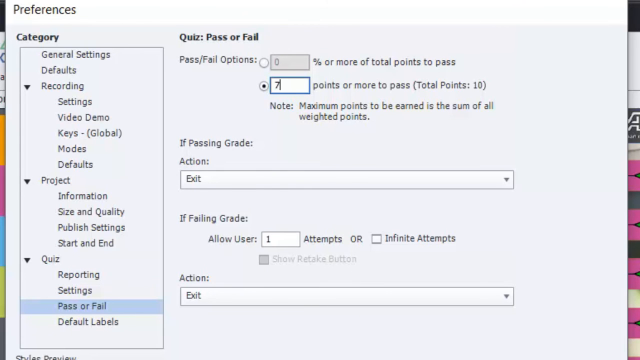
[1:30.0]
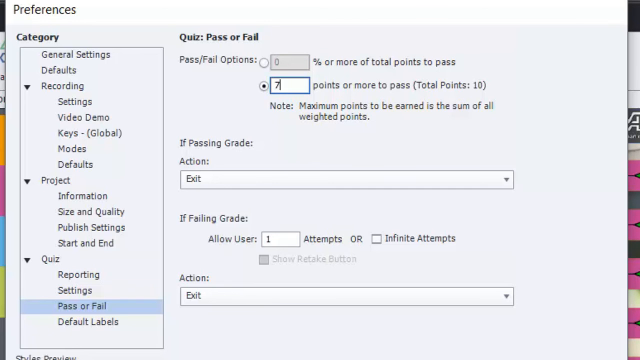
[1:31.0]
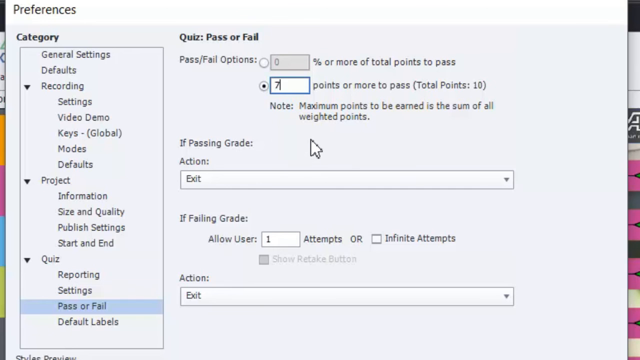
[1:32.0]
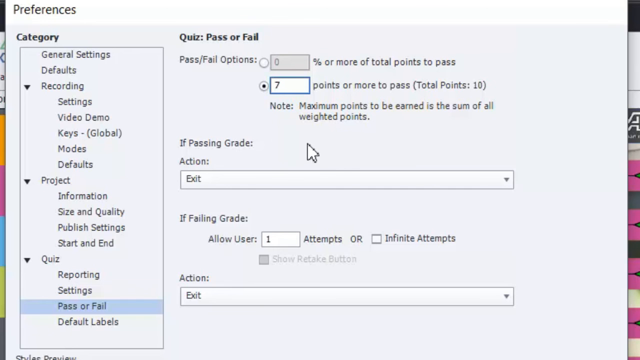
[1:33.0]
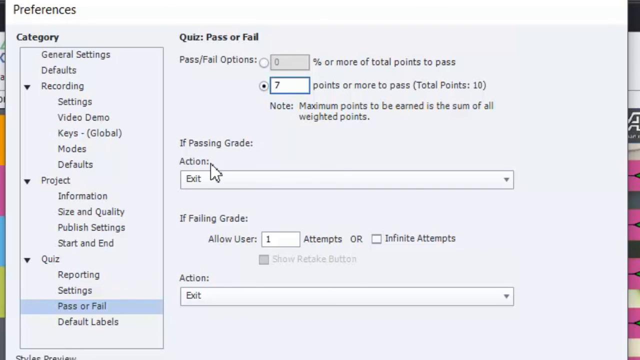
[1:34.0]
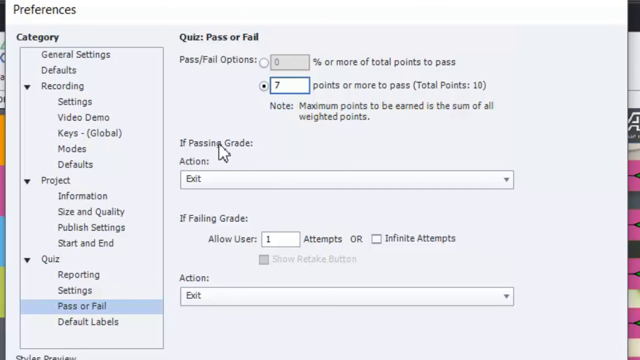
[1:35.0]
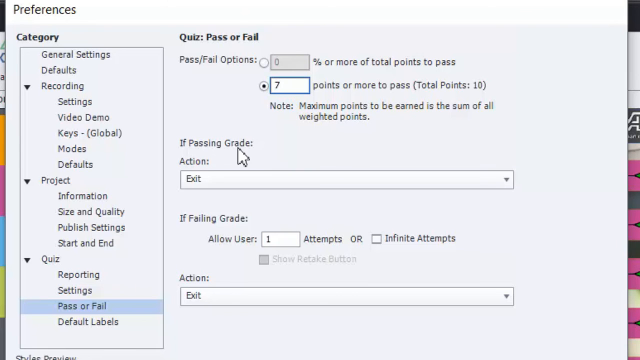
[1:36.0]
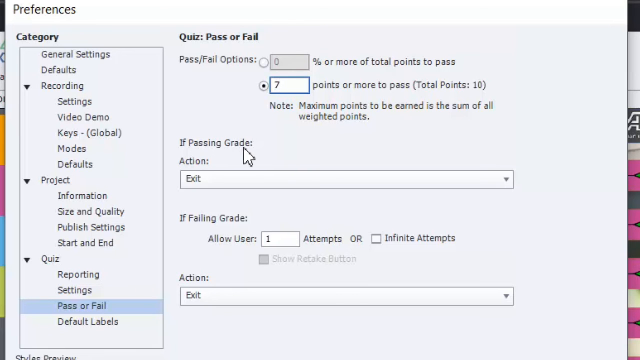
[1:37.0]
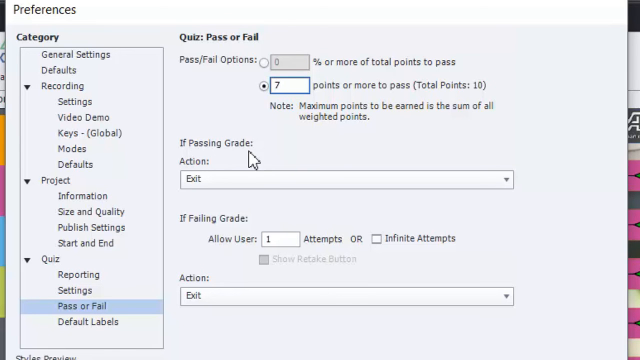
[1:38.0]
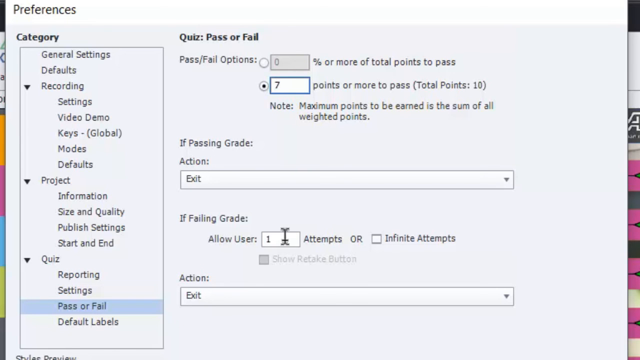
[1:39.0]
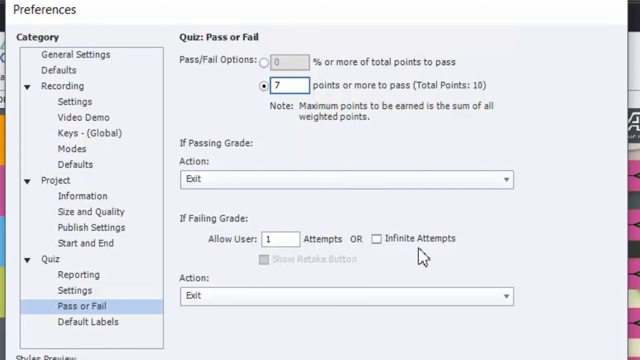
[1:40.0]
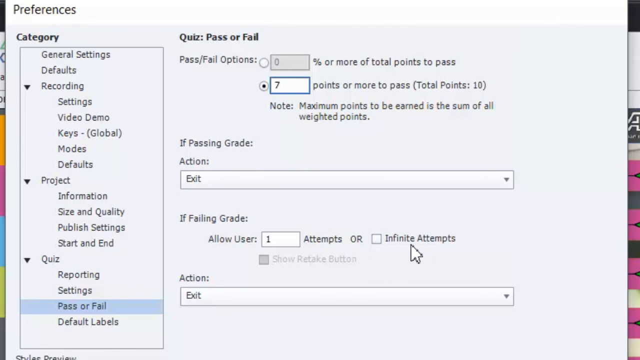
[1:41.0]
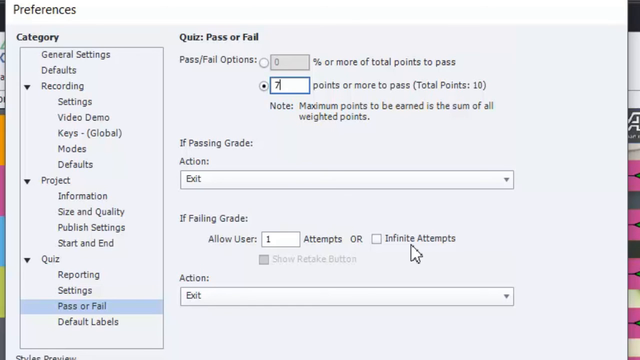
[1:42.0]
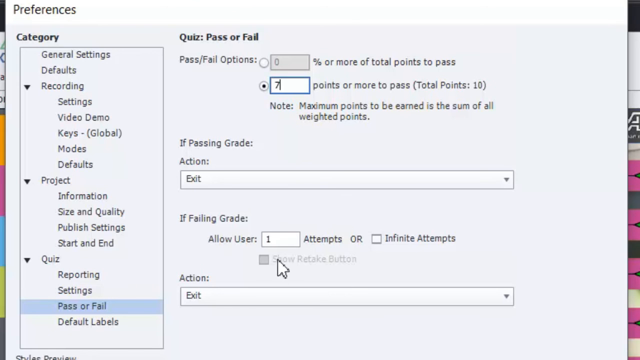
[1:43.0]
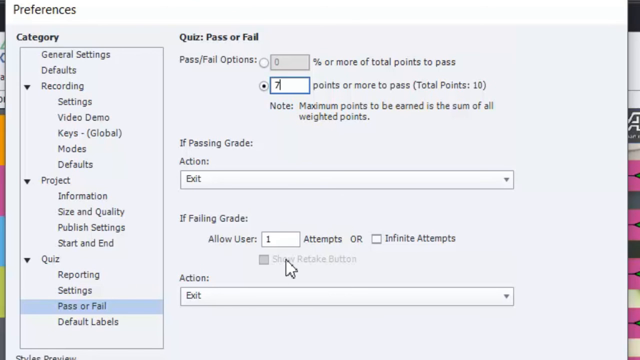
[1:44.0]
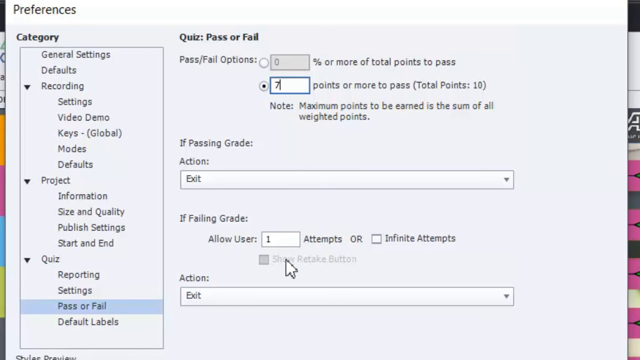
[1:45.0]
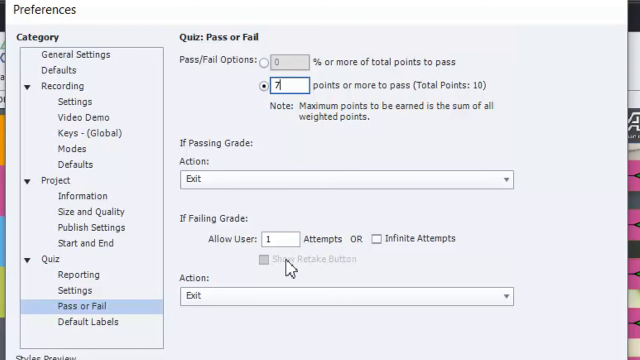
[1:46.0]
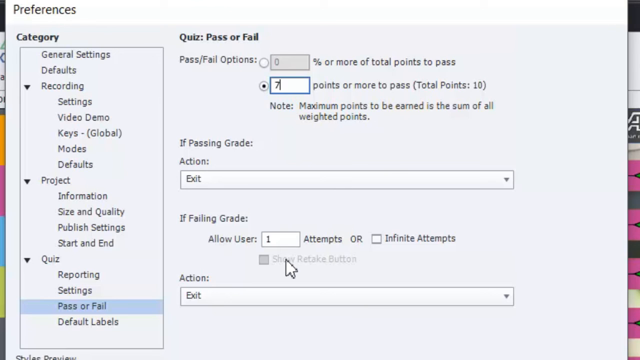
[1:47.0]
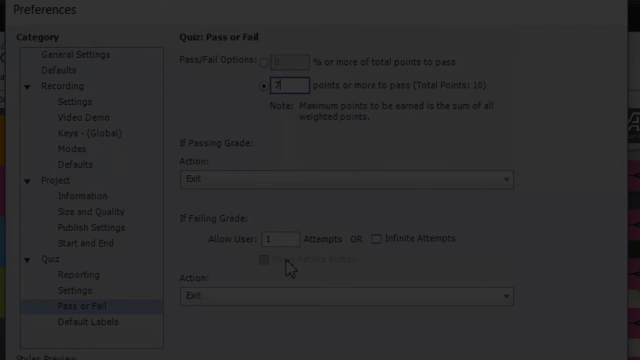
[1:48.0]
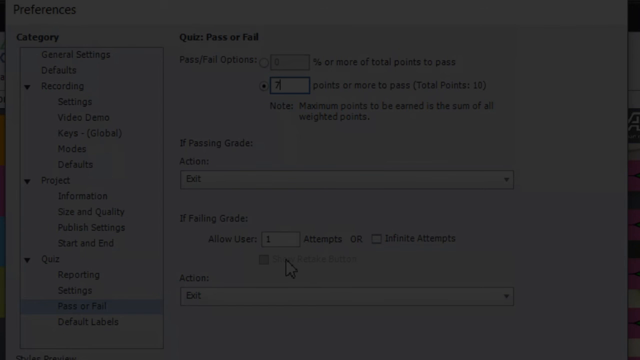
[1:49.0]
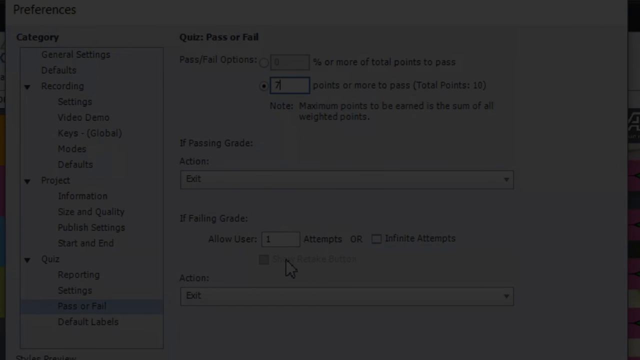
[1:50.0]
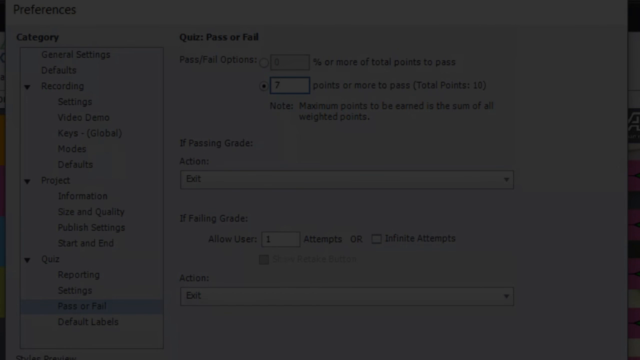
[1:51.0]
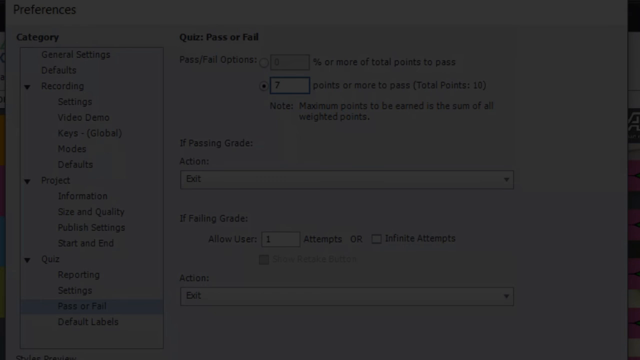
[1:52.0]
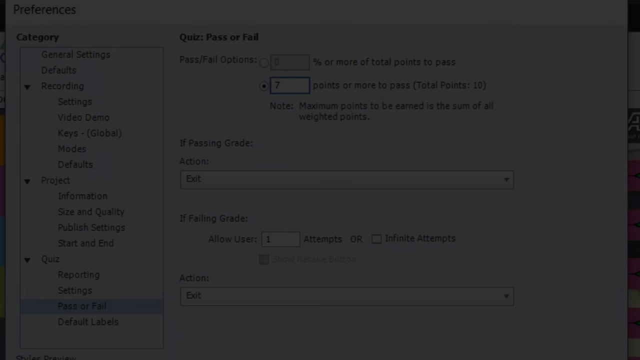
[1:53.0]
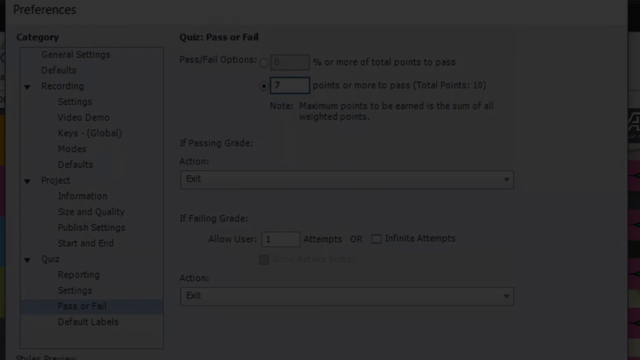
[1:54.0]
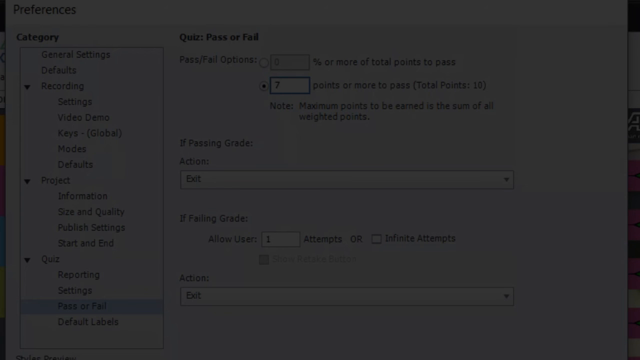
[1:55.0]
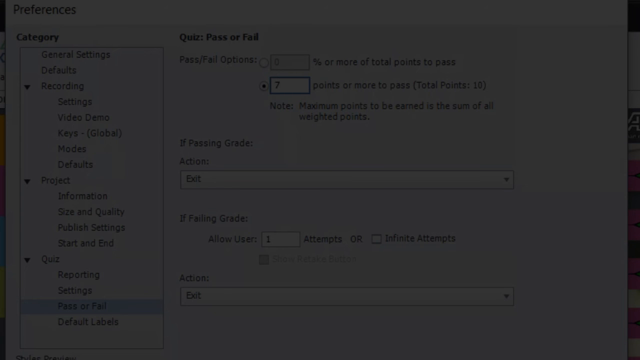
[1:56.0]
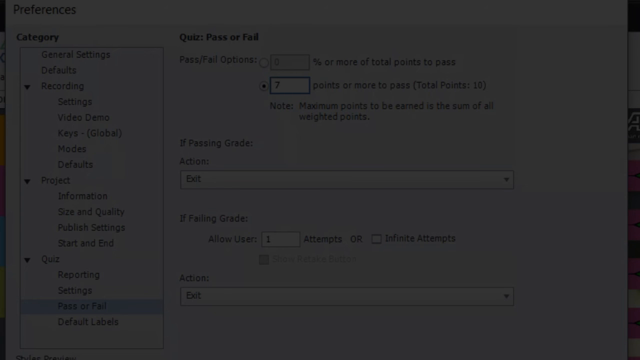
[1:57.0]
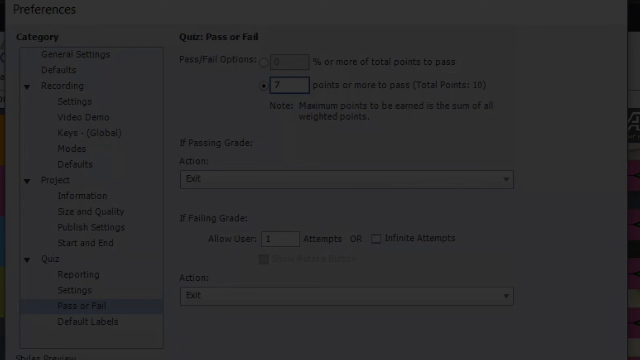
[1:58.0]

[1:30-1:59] Further options are visible: "If passing grade, action exit. If failing grade, allow user one attempt or infinite attempts", with action "exit". The cursor hovers over a greyed-out option, and then the entire screen appears greyed out, with the content still visible in the background. The Preferences screen has categories on the left side: general settings, defaults, recording with the subcategories settings, video demo, keys, global, modes and defaults; project, with the subcategories information, size and quality, publish settings, and start and end; and quiz, with reporting, settings, pass or fail and default labels. On the right side are the quiz pass or fail options: two bullet points, the first reading "percentage or more of total points to pass" and the second "or more to pass total points". A note reads "maximum points to be earned is the sum of all weighted points". Below are "if passing grade" with an action drop-down set to "exit", and "if failing grade, allow user one attempt or infinite attempts" with another action drop-down set to "exit" at the bottom of the right side.